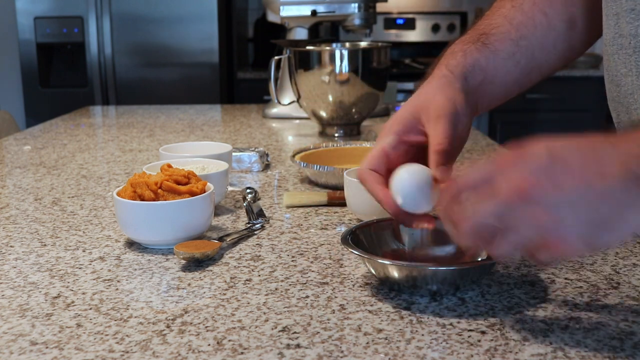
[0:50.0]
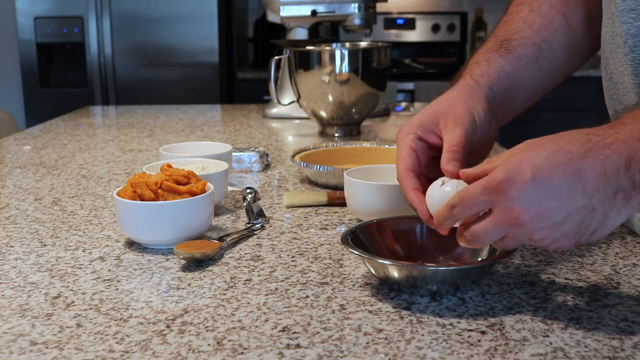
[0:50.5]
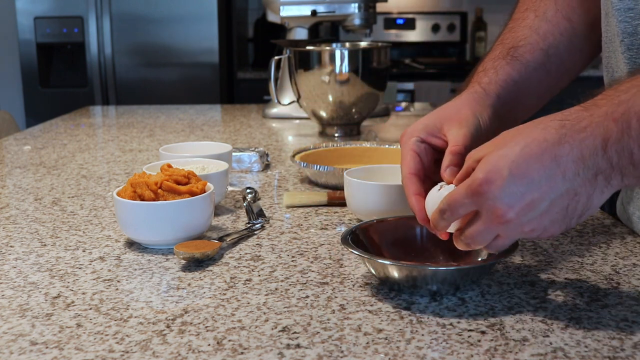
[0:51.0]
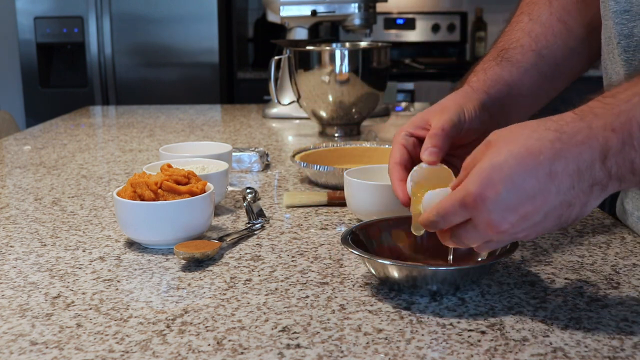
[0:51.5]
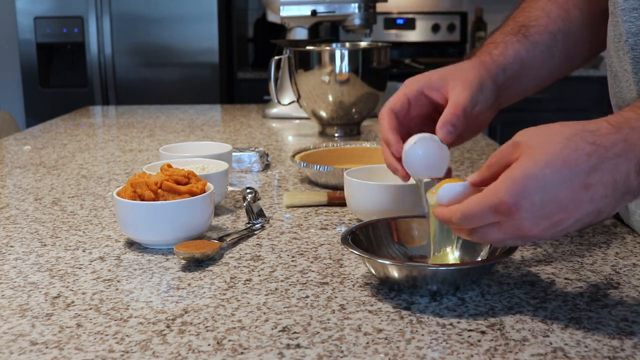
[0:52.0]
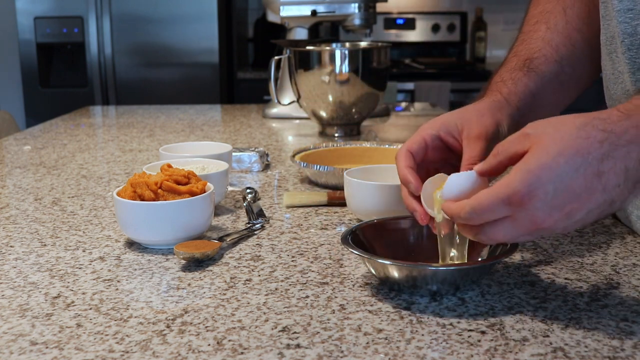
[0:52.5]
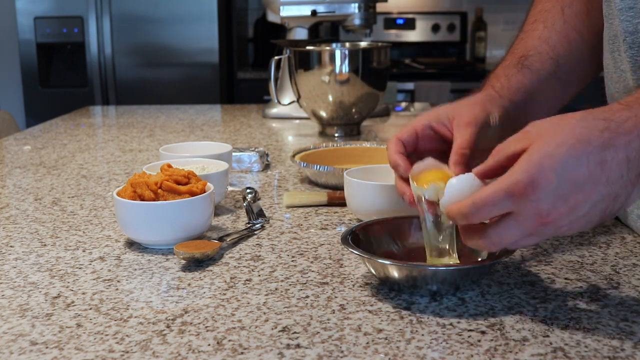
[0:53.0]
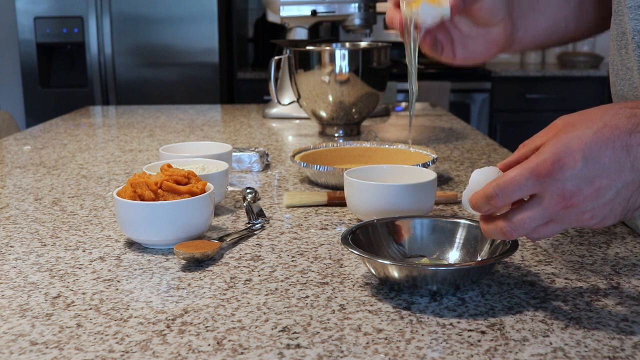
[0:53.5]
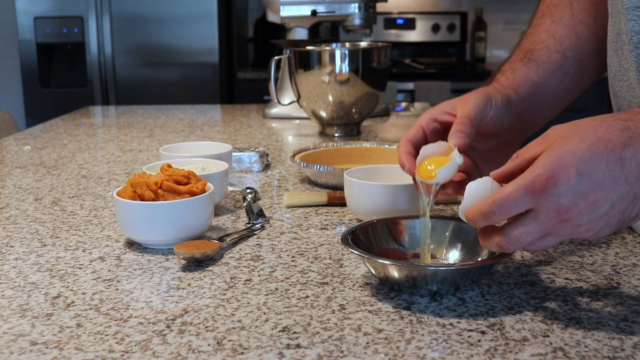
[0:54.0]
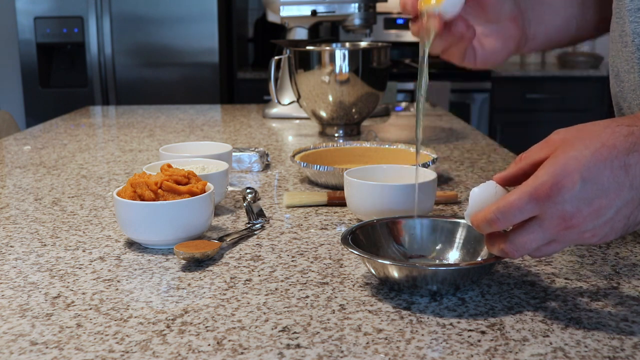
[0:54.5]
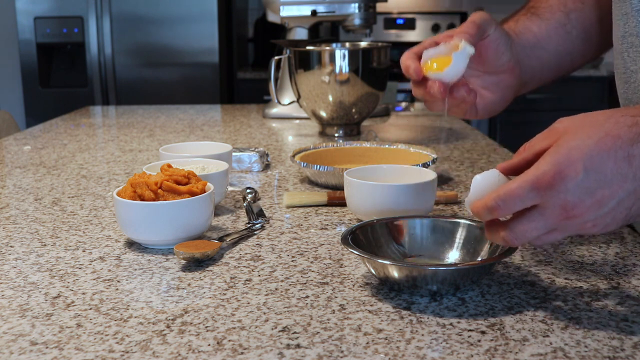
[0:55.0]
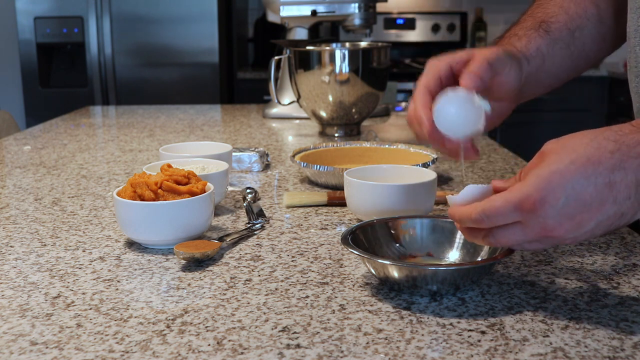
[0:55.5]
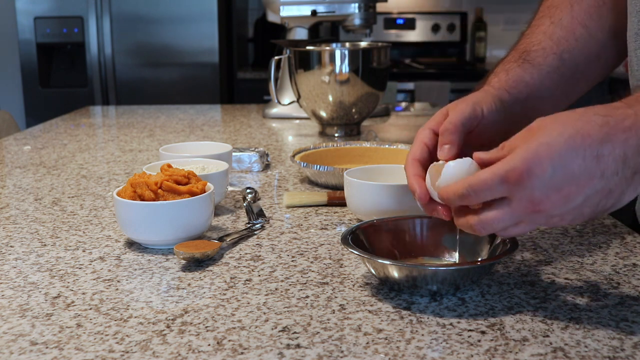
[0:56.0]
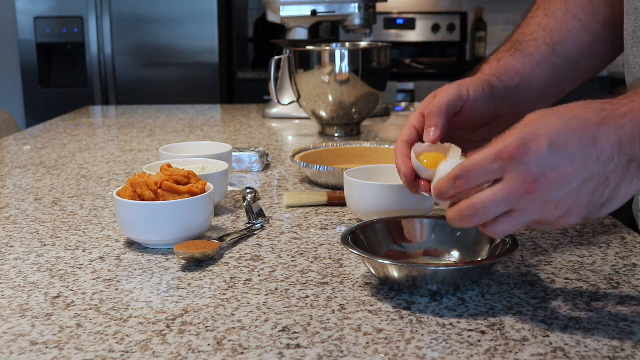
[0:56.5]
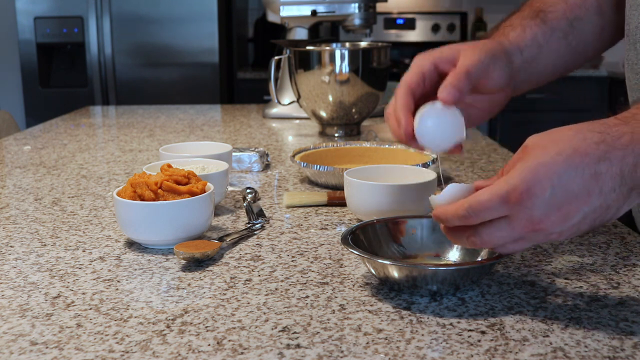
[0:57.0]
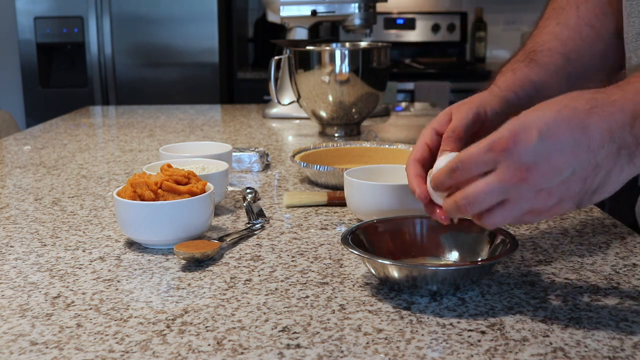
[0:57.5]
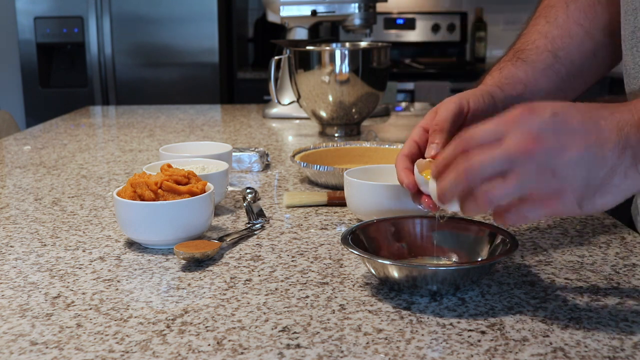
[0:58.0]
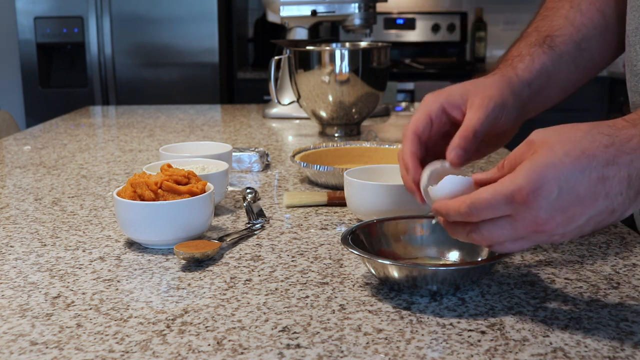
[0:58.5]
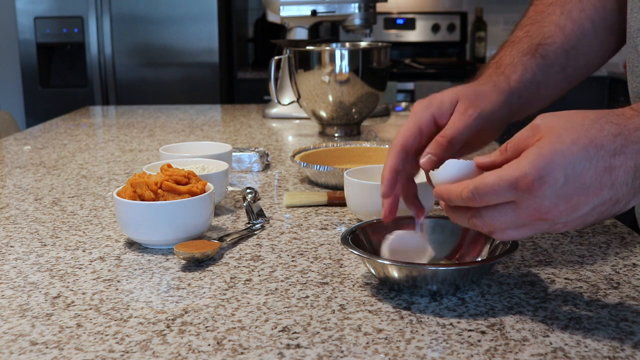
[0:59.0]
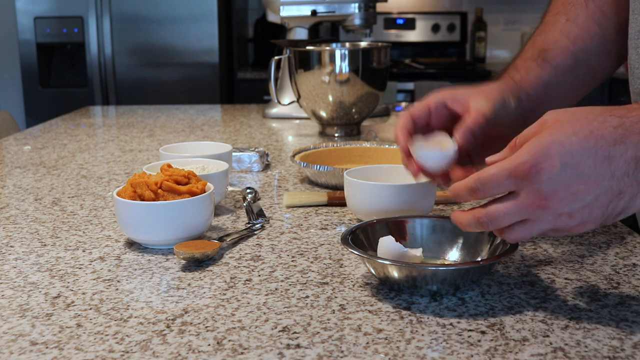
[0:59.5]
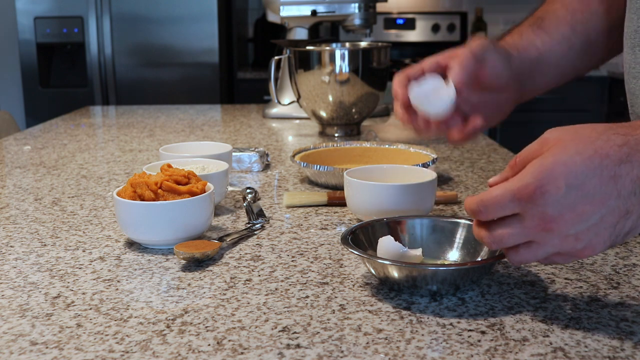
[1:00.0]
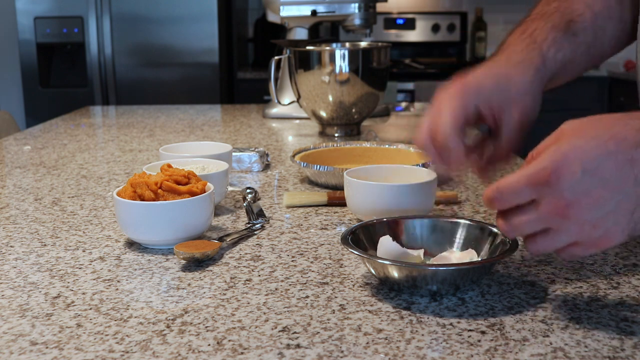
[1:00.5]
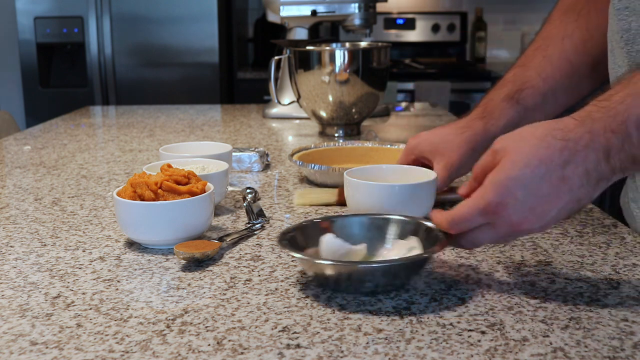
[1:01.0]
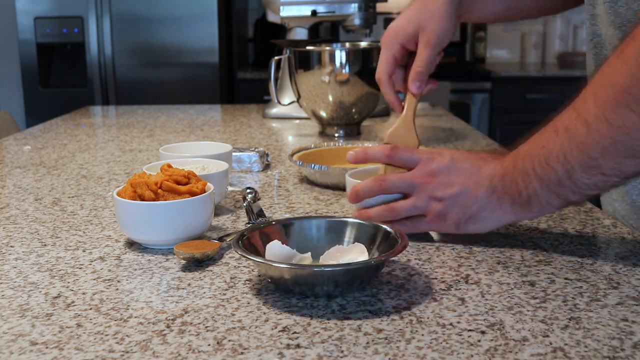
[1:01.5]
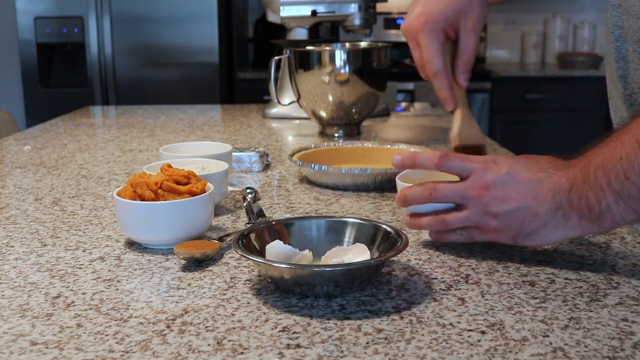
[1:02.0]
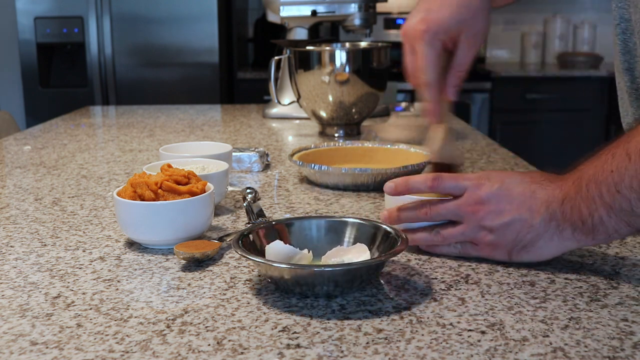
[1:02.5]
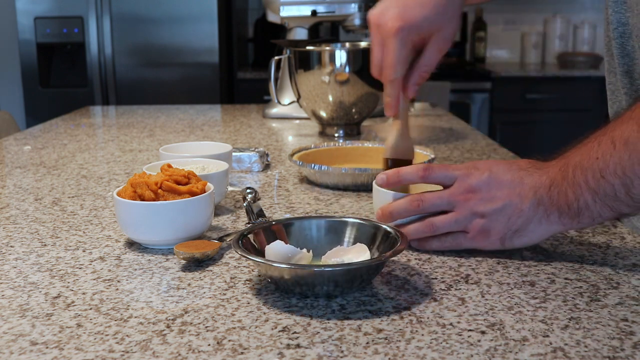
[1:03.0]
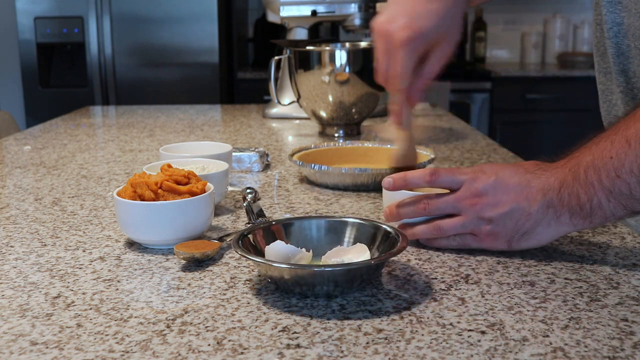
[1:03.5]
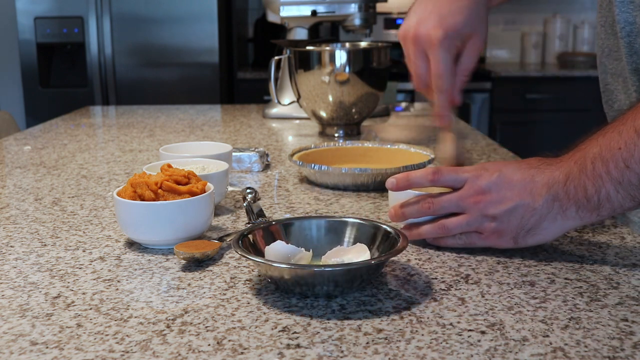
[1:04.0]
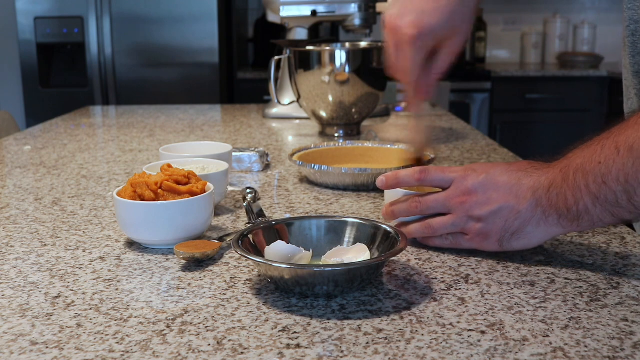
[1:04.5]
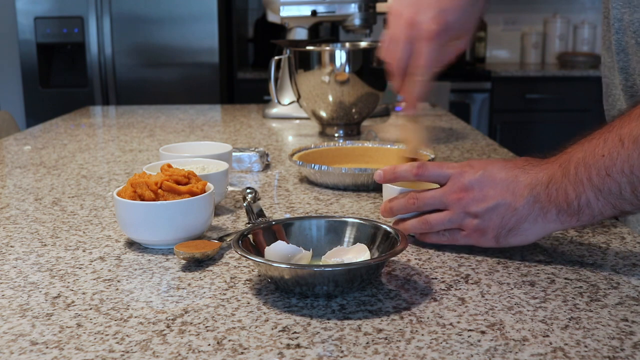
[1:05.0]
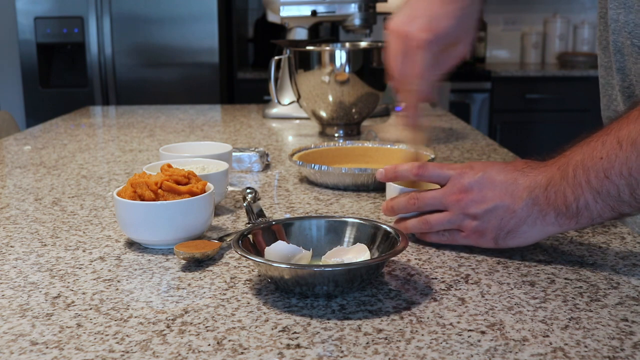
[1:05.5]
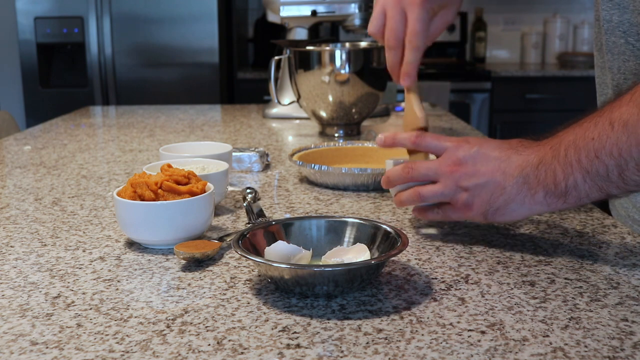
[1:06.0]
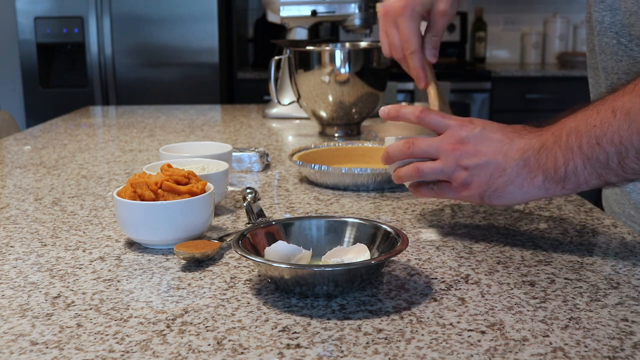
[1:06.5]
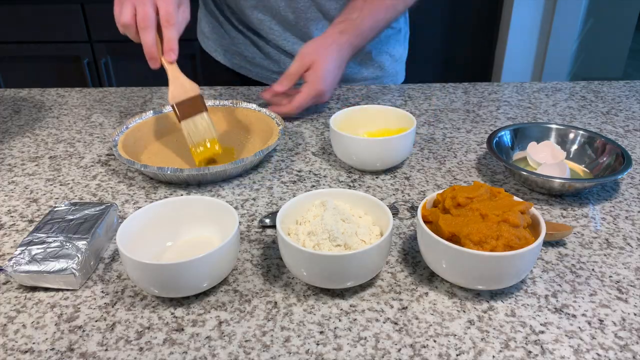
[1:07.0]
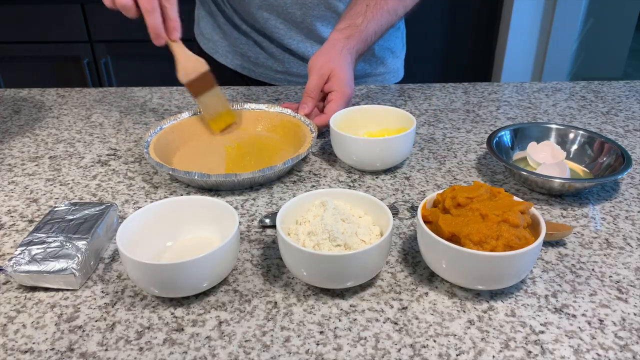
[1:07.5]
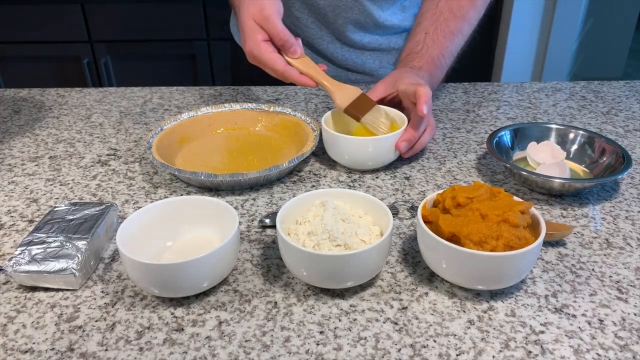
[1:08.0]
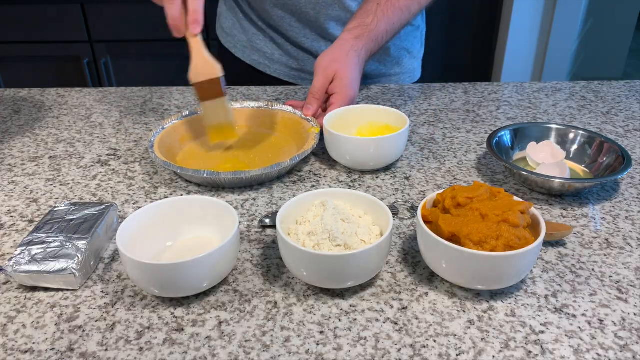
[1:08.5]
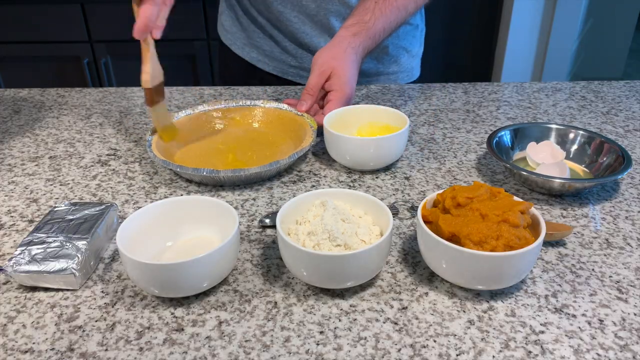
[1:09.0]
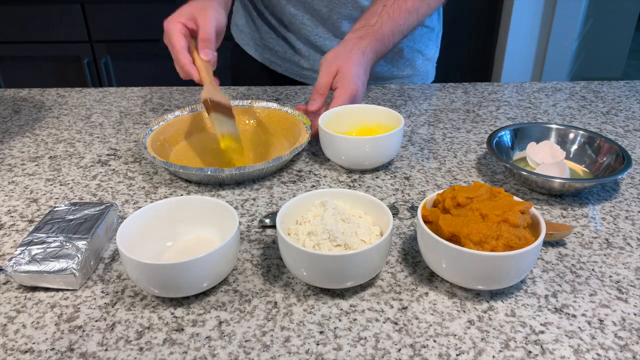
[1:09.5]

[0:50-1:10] The view is of the countertop in the kitchen, with the fridge at the back and the cooker visible. On the countertop are bowls, a silver machine used to whip cream or mix a mixture, another big silver bowl, four bowls, two silver ones and something like a spoon. The man cracks an egg into the silver bowl, using the eggshell to separate it so the yolk remains in the shell, then pours the yolk into another bowl. He beats and whips the yolk repeatedly, then takes the result and coats the inside of the silver bowl with it.